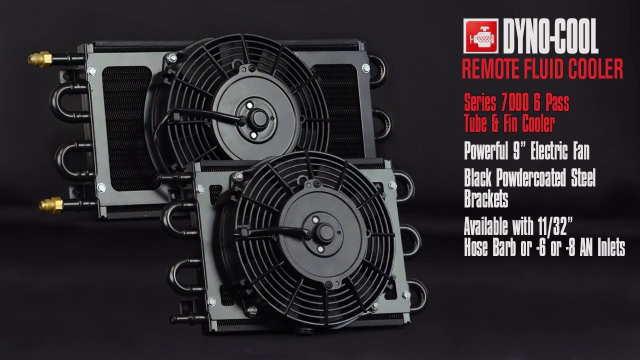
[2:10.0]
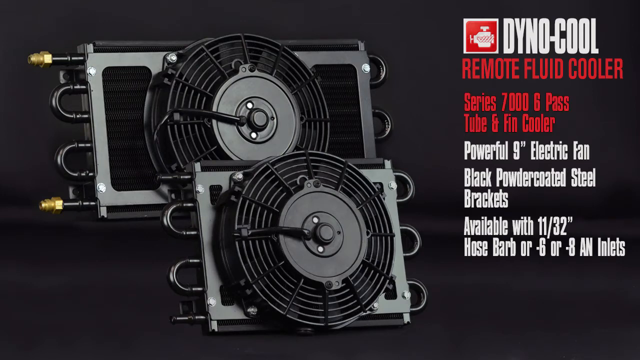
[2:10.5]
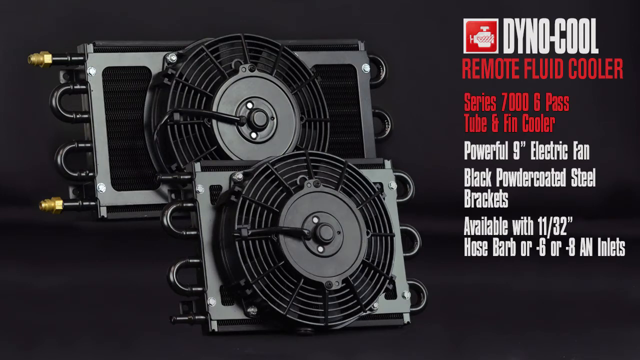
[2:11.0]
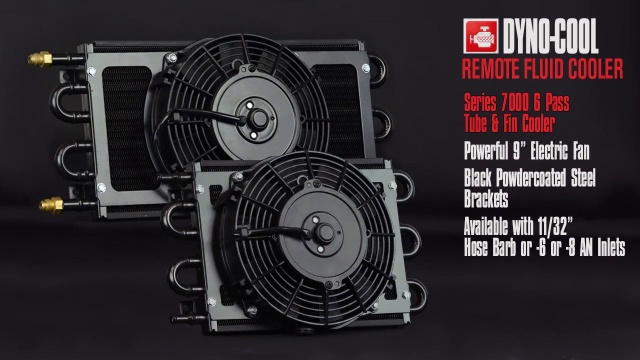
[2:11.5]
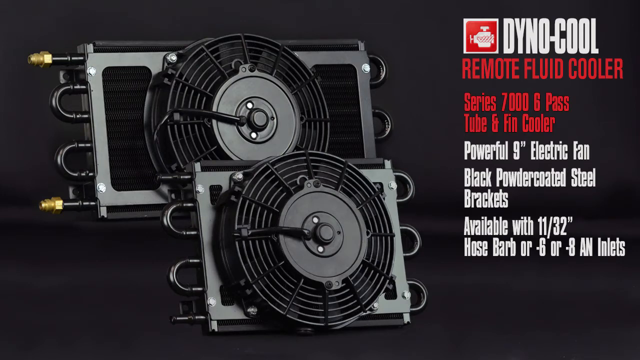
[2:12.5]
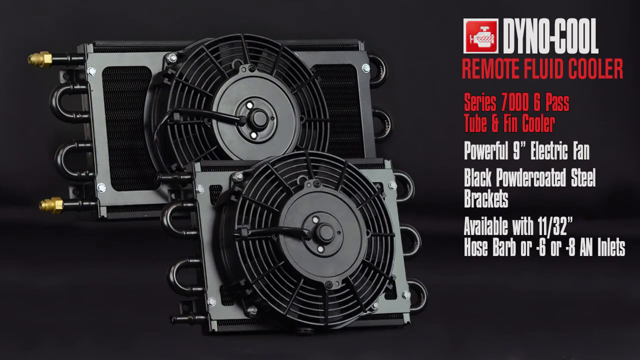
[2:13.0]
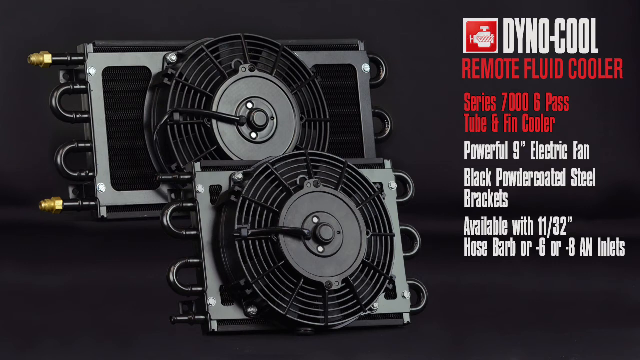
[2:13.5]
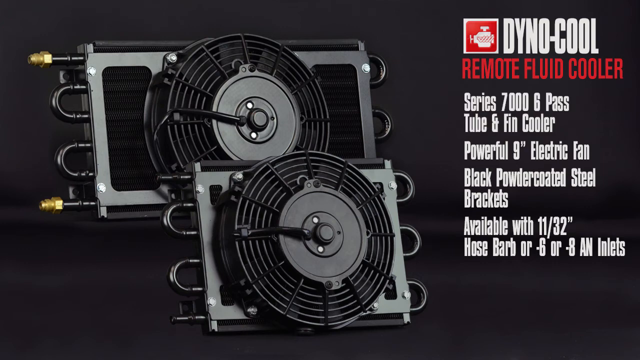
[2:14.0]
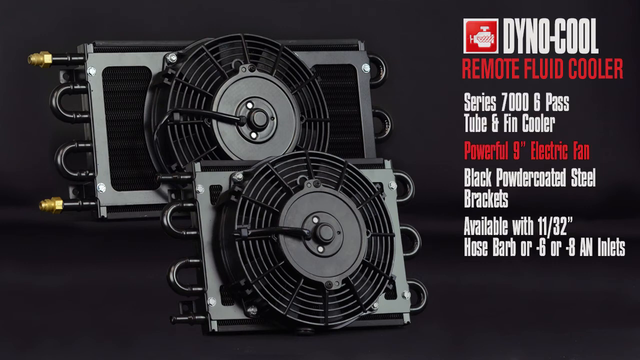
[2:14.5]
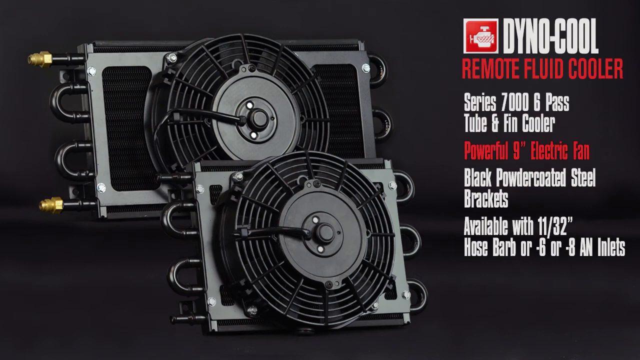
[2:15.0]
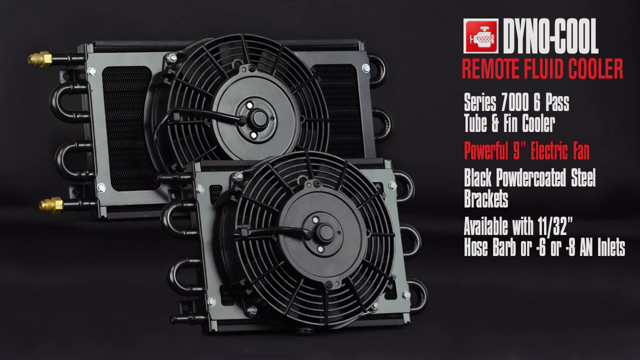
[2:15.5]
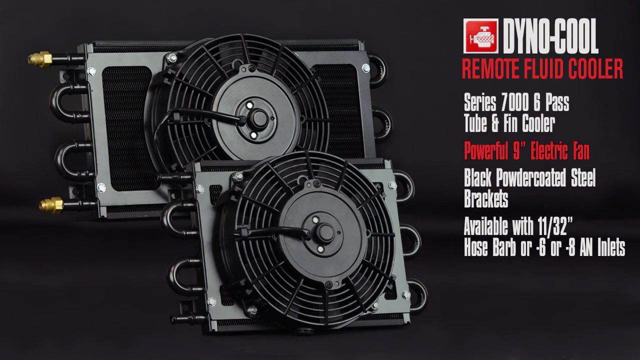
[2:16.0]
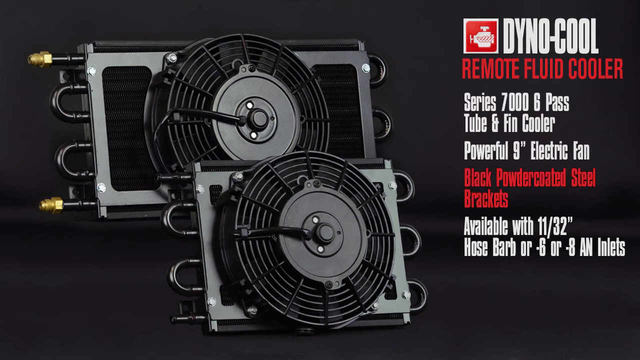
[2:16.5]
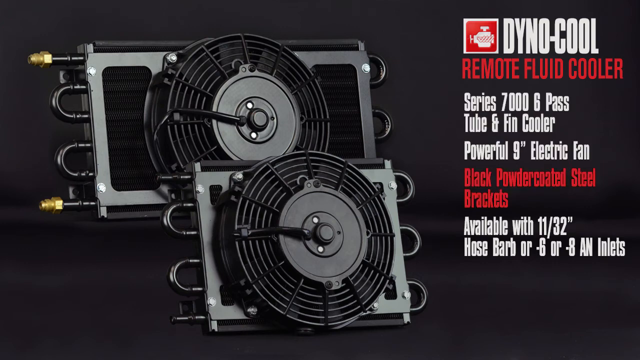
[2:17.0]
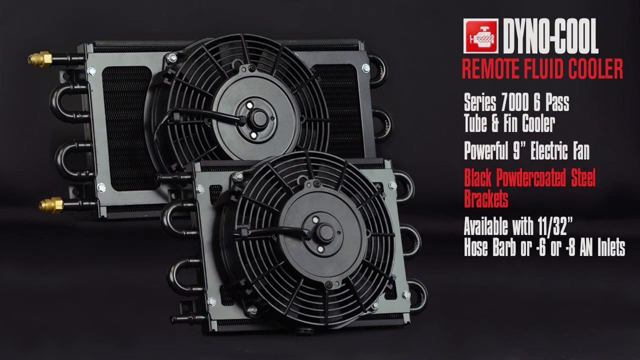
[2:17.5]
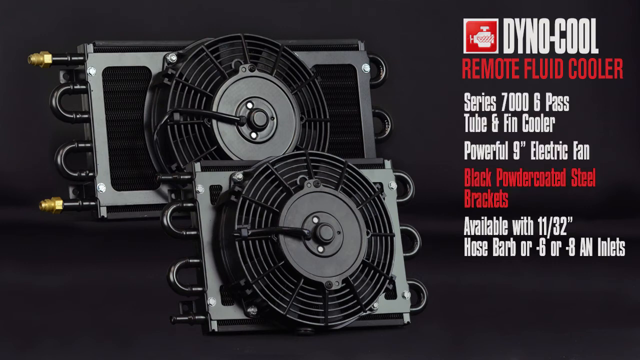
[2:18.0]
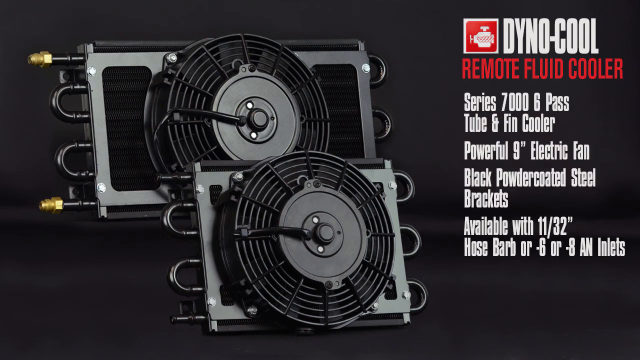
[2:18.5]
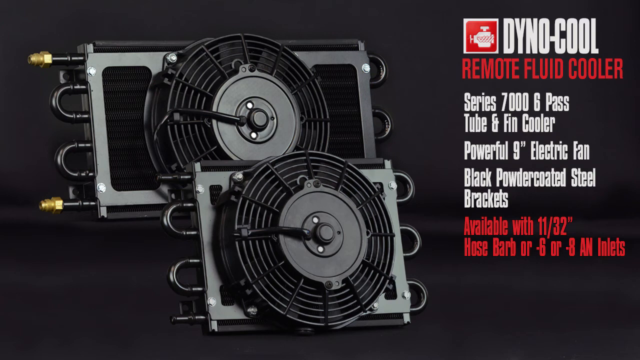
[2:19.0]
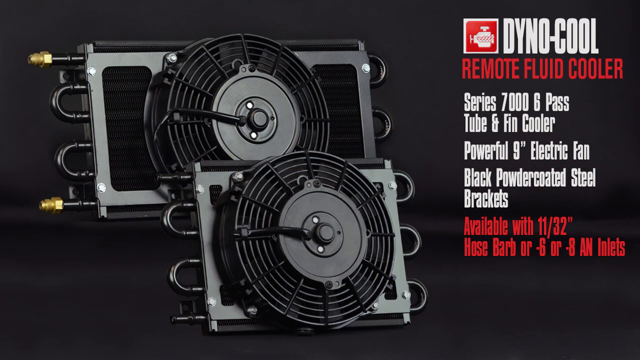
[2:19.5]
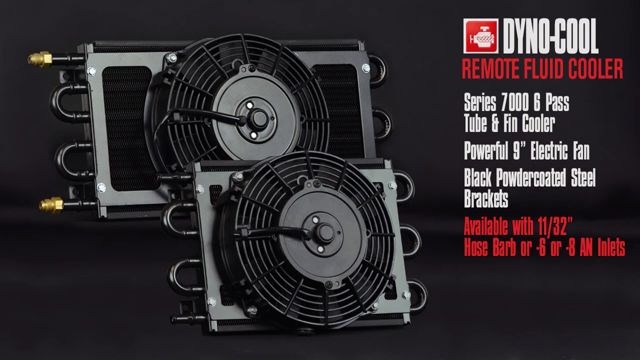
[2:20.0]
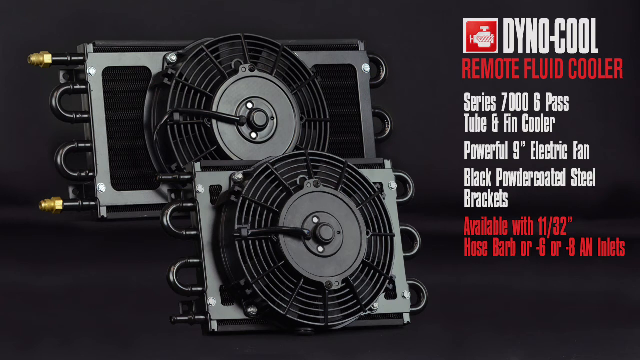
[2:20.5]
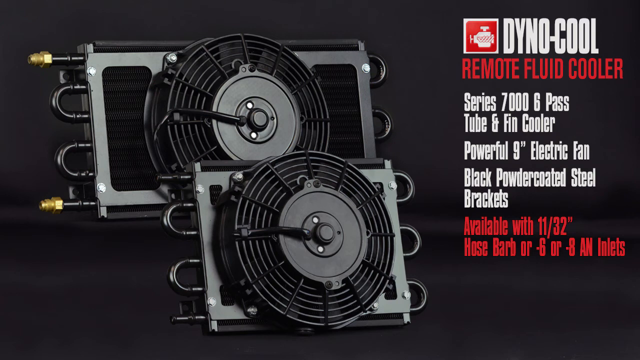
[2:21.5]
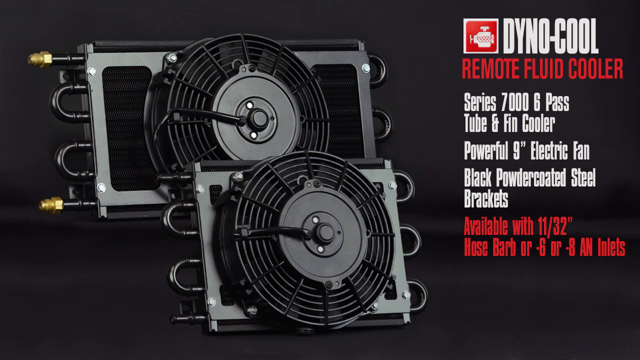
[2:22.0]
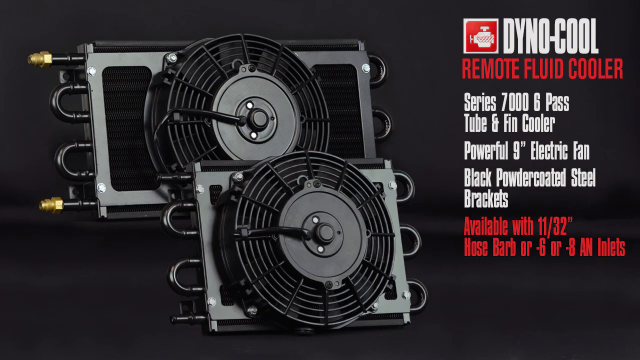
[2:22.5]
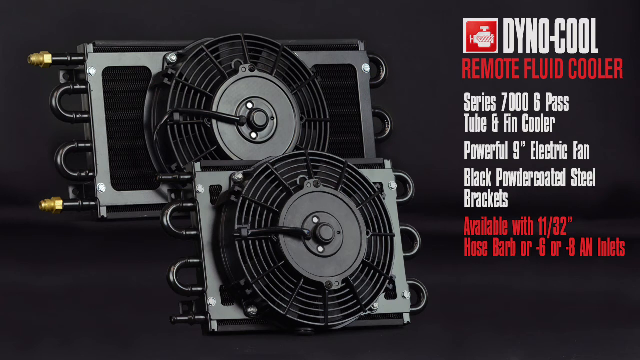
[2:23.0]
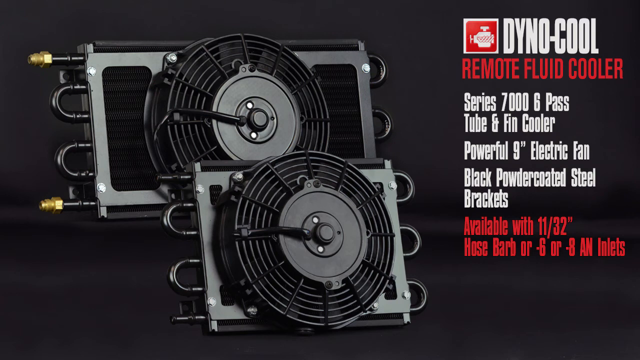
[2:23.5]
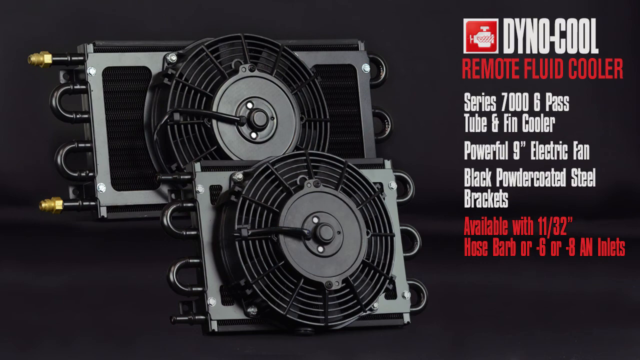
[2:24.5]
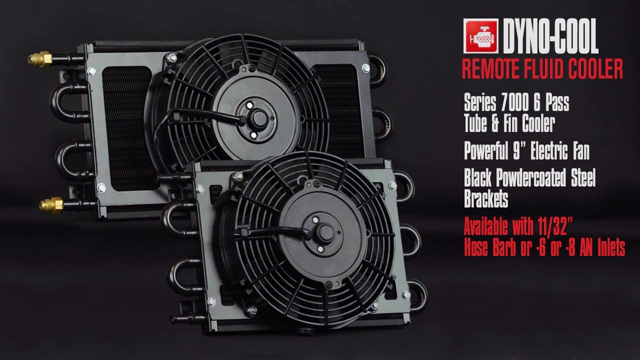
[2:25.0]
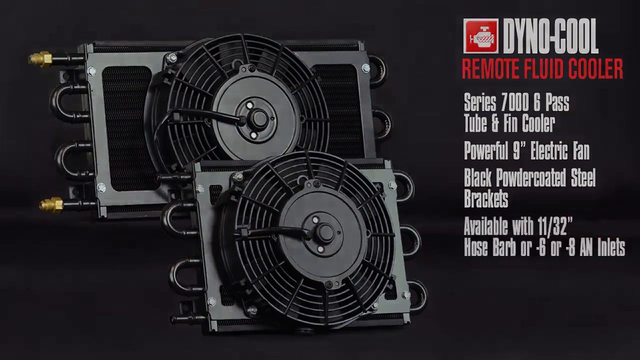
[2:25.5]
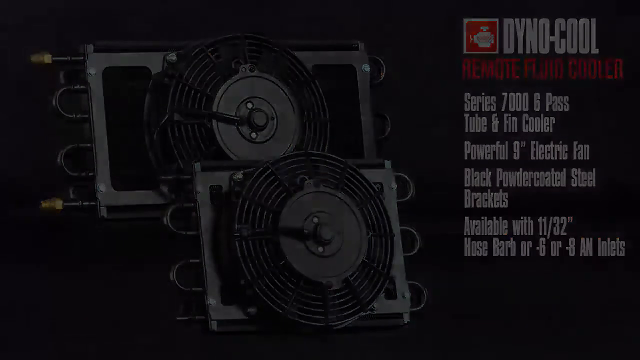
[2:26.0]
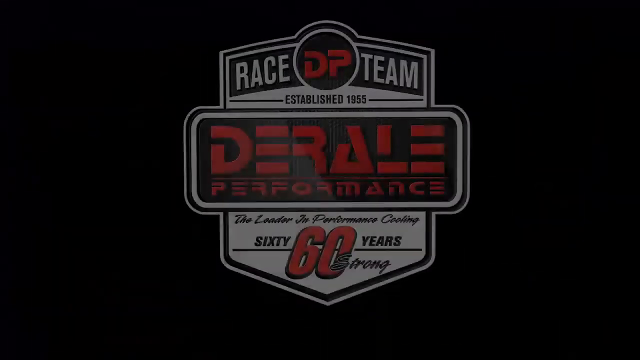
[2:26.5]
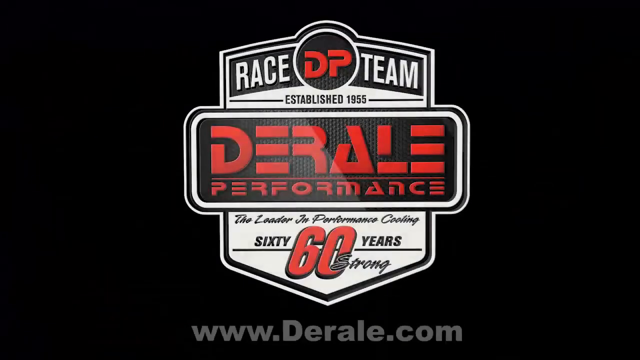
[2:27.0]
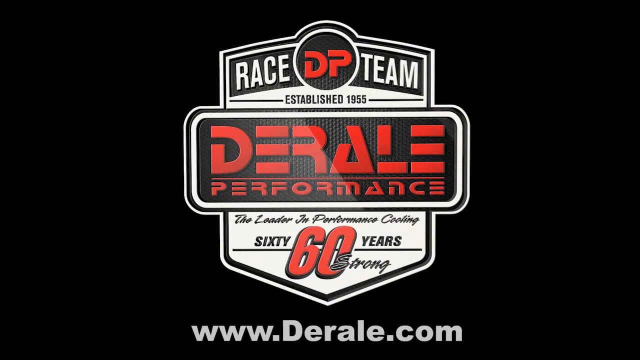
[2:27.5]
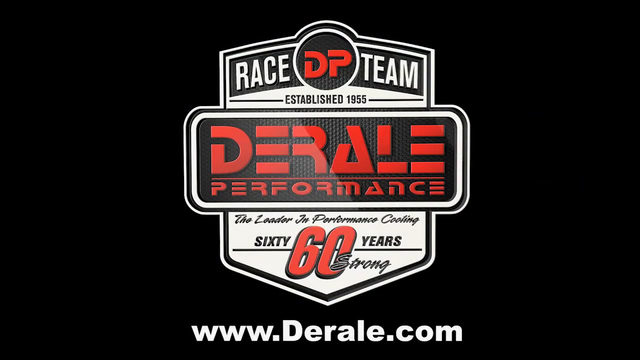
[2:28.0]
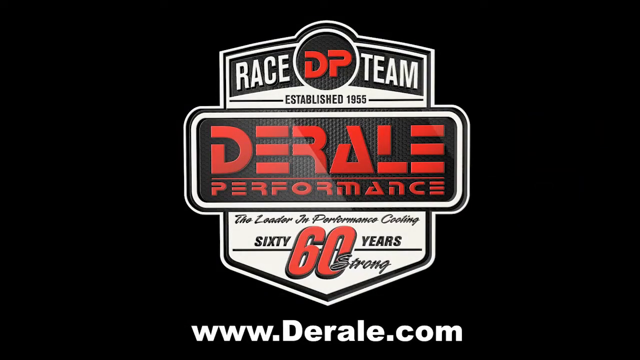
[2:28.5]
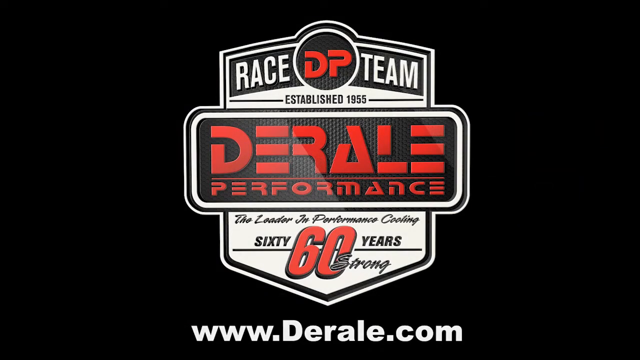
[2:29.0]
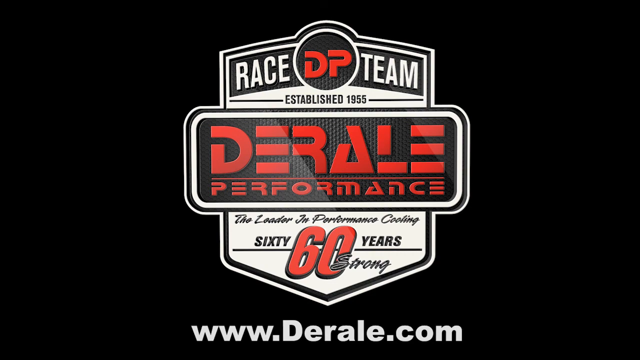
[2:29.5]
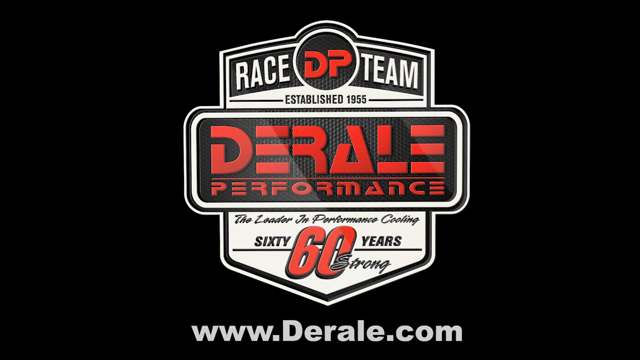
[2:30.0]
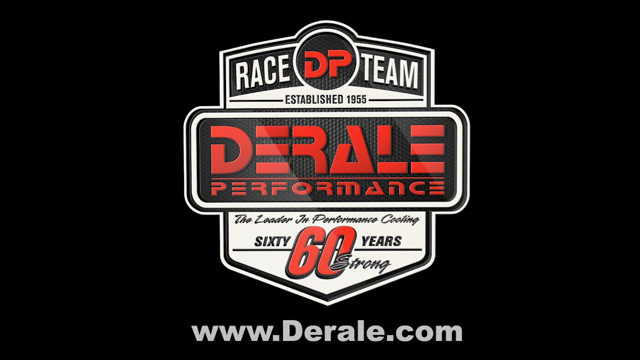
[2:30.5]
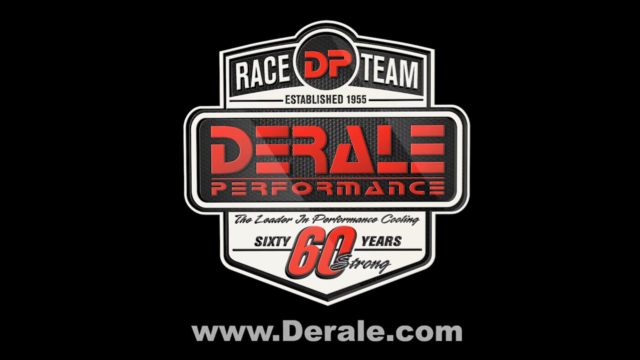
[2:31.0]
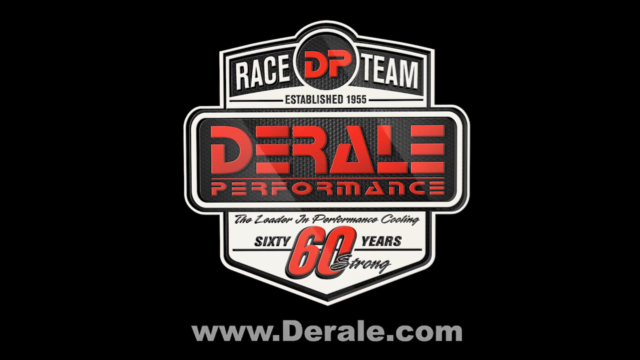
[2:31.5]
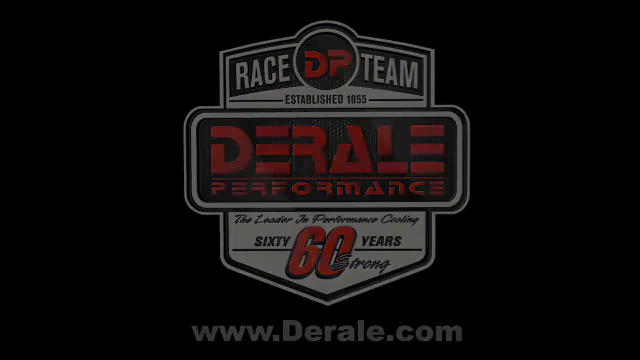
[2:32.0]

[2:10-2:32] A remote fluid cooler is shown with the text "series 7000 6 pass tube and fin cooler with powerful 9 inches electric fan, black powder coated steel brackets", available with 11/32 inch hose barb or minus 6 or minus 8 AN inlets. Each line of white letters is colored red in turn, while the left side shows the cooler itself in its two forms with its different inlets. The video ends with the D-Rail Performance logo, a race team established in 1955, with text mentioning "60 years" and "60 strong". The logo is a shield with red and white letters over a black background, and it gives information about the company, which seems to be advertising these coolers in various sizes.